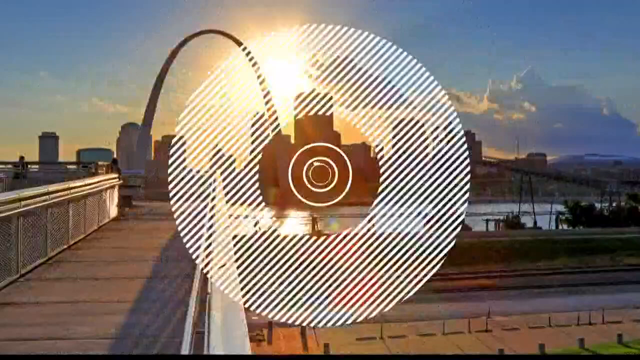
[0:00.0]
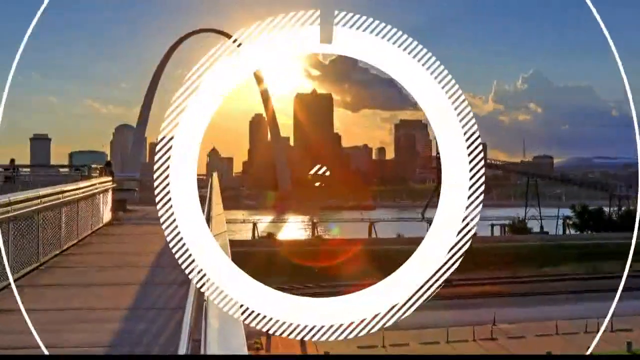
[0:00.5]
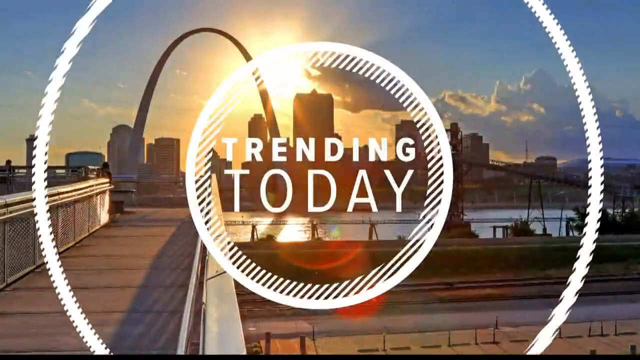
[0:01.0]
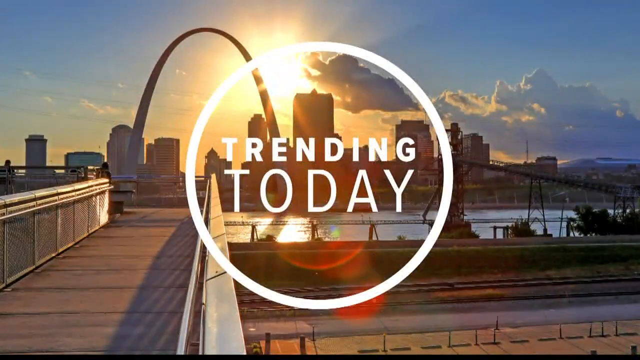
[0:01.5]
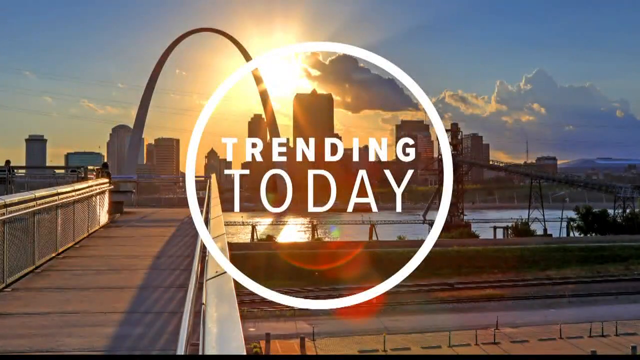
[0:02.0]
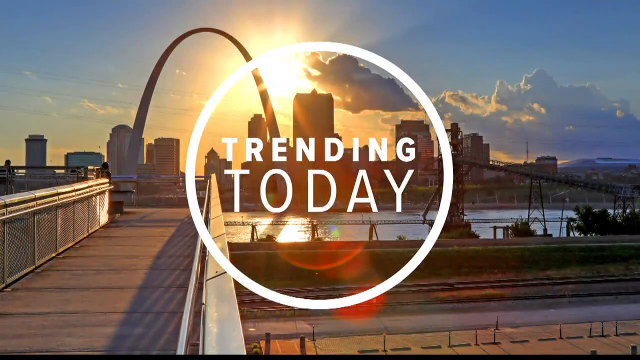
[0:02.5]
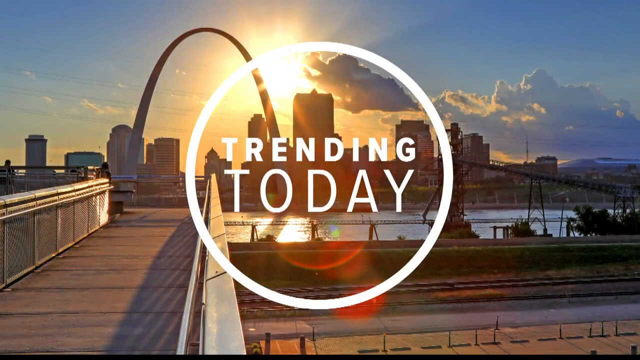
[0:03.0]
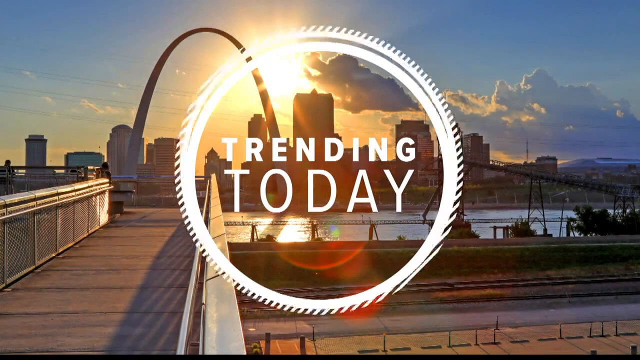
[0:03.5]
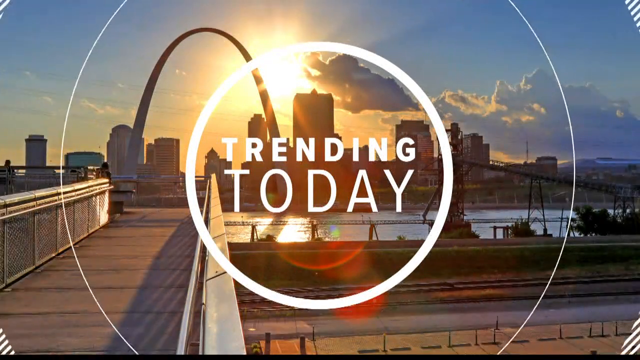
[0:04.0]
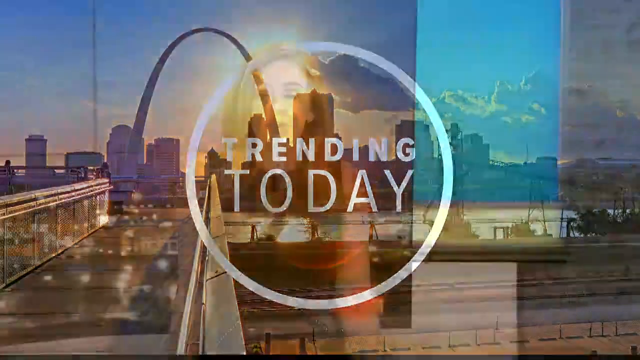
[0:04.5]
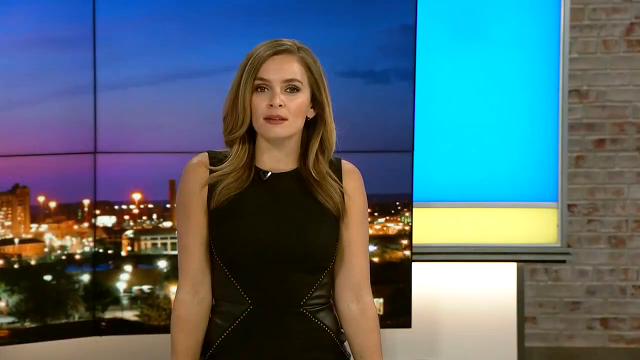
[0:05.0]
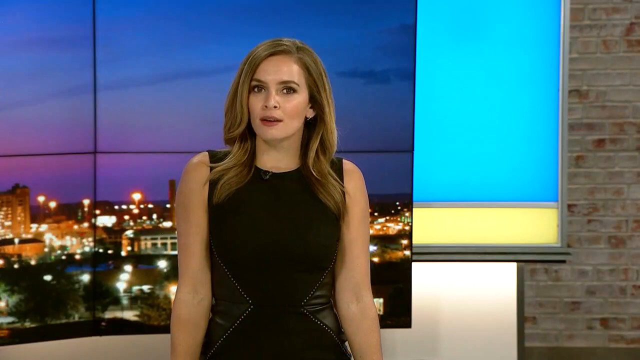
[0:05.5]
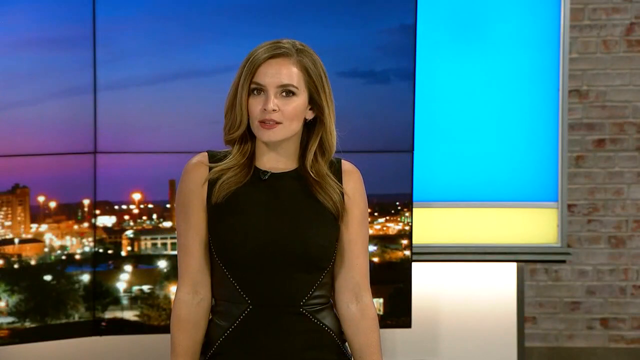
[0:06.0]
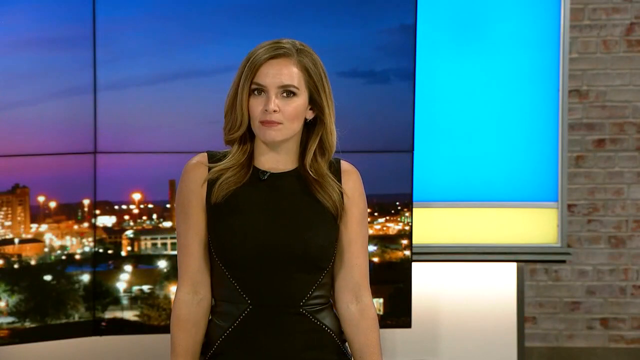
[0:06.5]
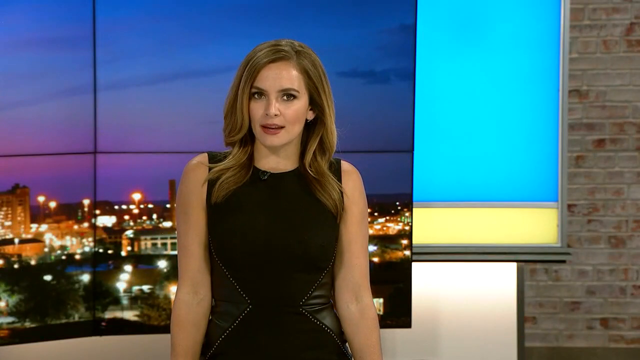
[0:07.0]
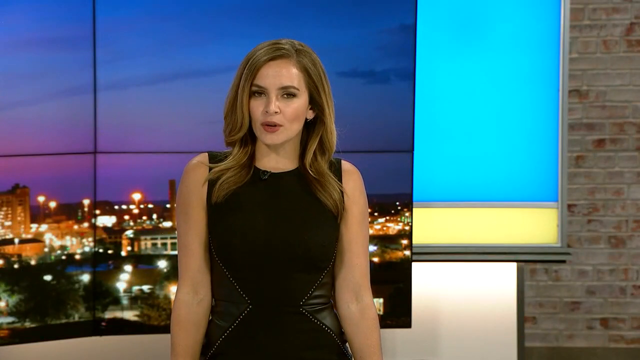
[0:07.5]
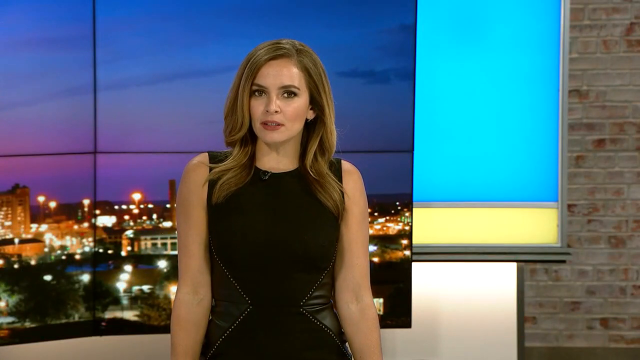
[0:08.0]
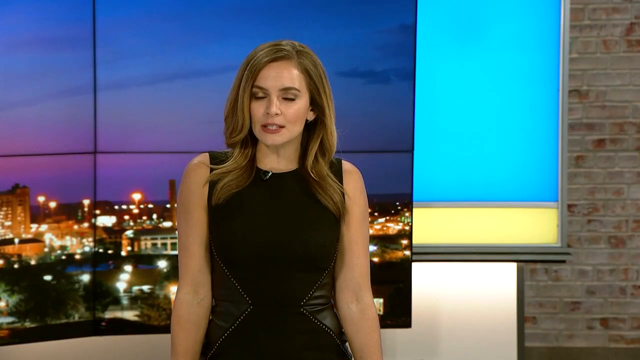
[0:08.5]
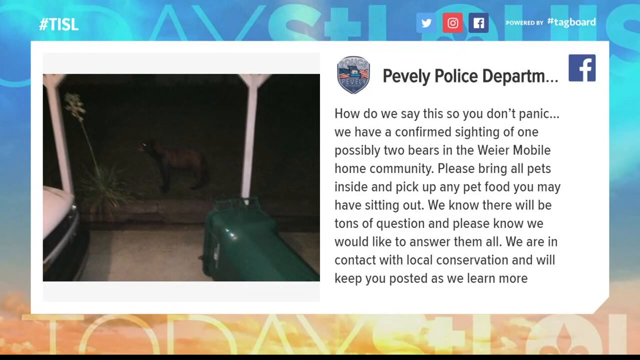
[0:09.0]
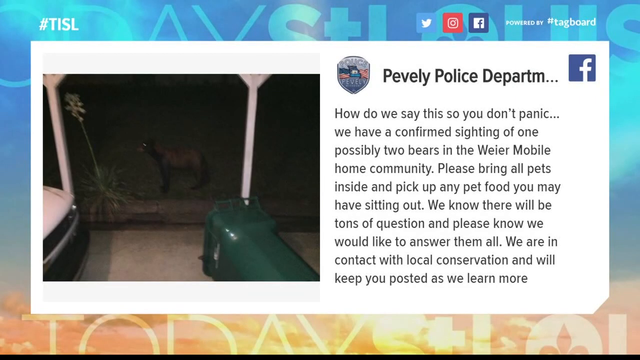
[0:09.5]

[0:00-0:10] The video opens on St. Louis, either at dawn or dusk, with a white graphic containing white text that says "trending today" overlaid on the image of the city. Next, a Caucasian woman with blondish brown hair, wearing a sleeveless black top, talks toward the camera. Behind her is an LED display made of multiple LEDs combined together, showing a city skyline at night. Then black text appears on the right of the screen next to an image of a toppled-over trash can.